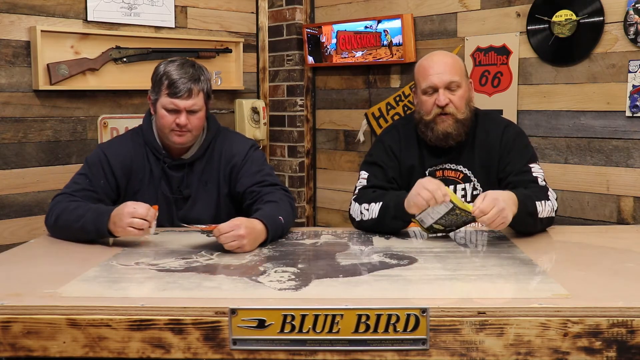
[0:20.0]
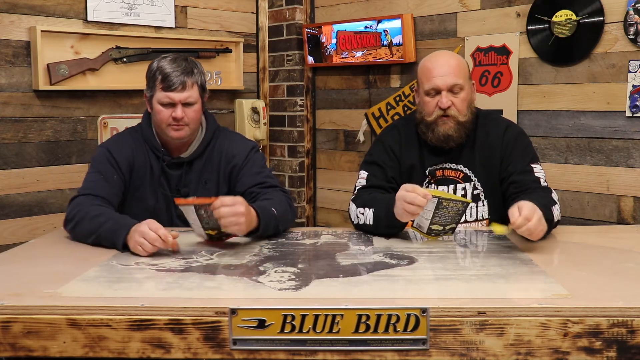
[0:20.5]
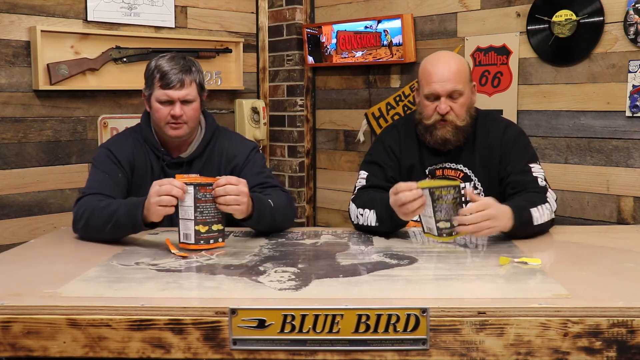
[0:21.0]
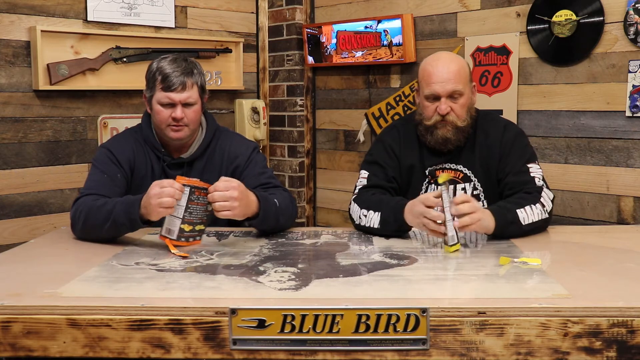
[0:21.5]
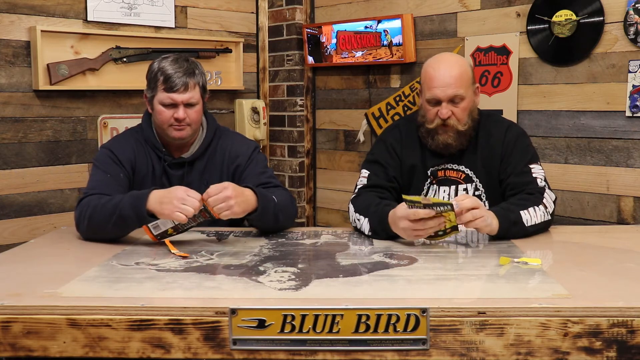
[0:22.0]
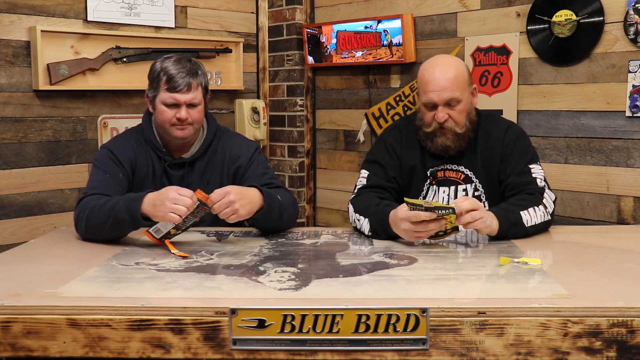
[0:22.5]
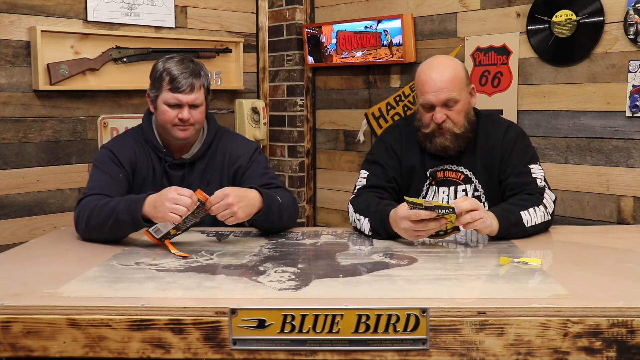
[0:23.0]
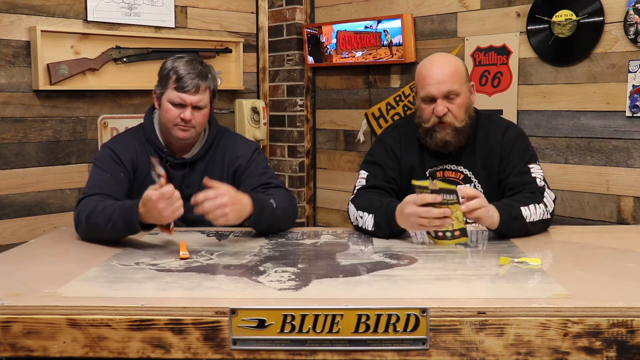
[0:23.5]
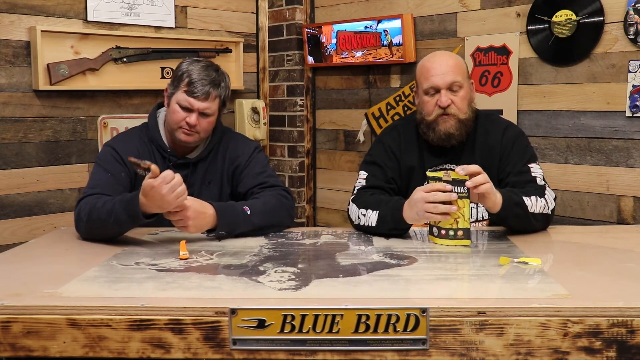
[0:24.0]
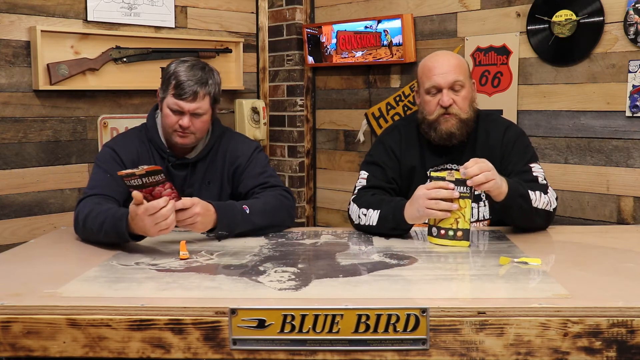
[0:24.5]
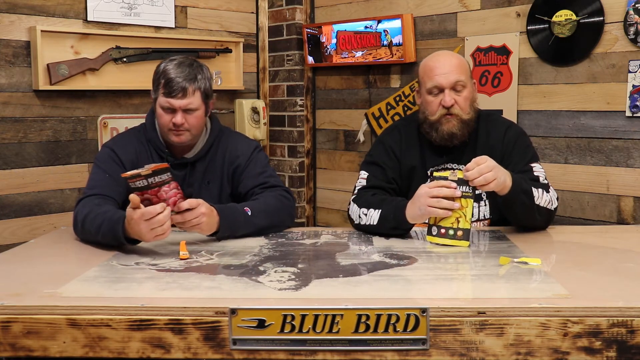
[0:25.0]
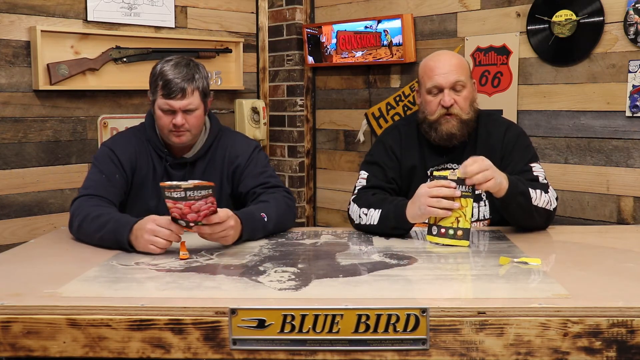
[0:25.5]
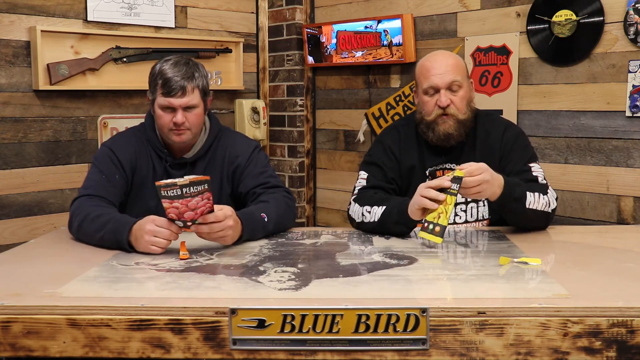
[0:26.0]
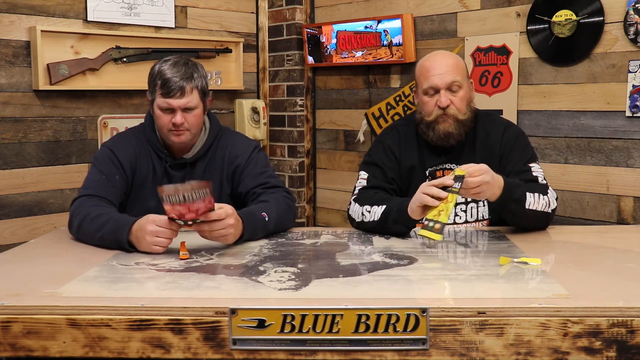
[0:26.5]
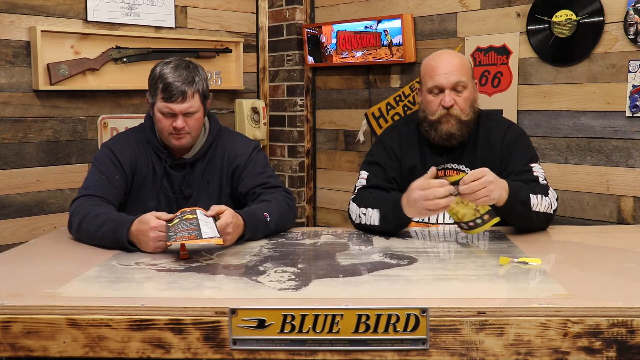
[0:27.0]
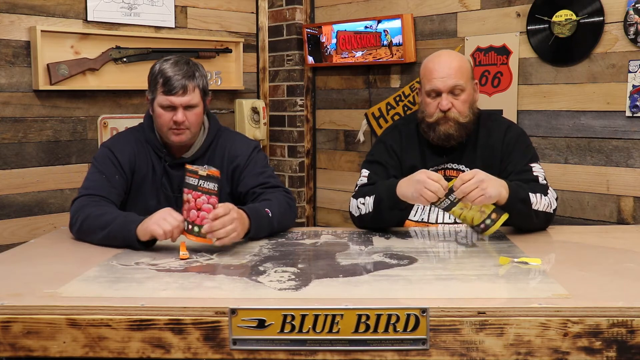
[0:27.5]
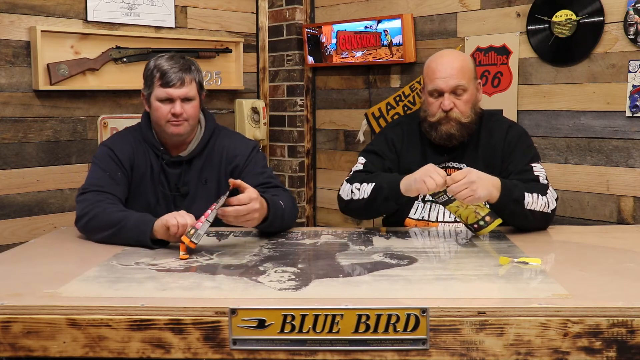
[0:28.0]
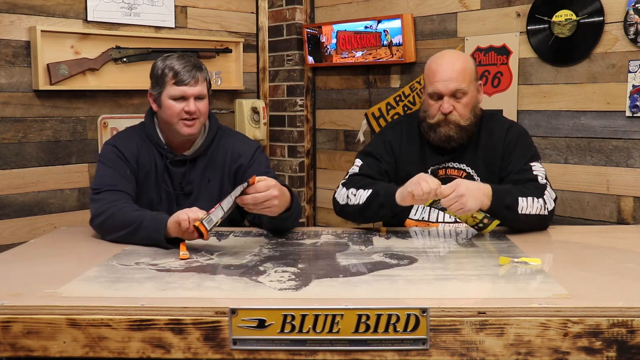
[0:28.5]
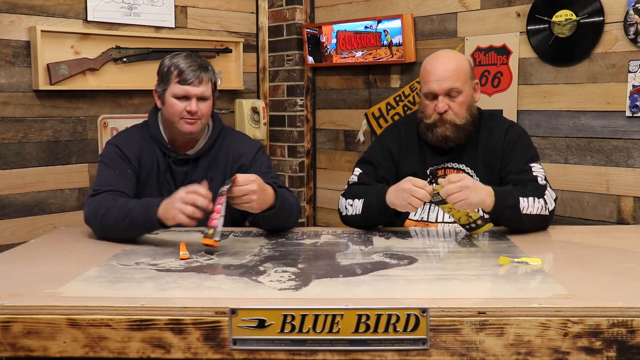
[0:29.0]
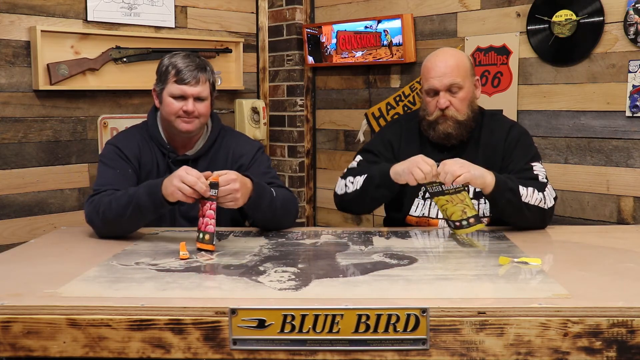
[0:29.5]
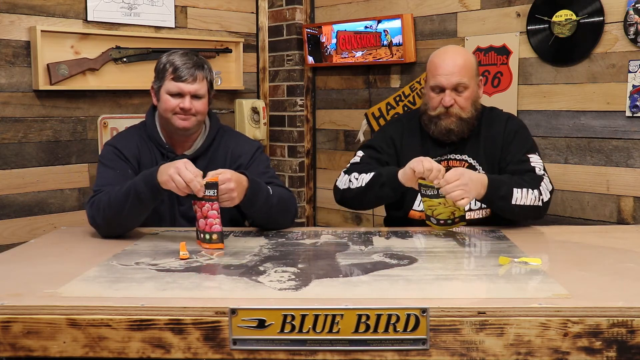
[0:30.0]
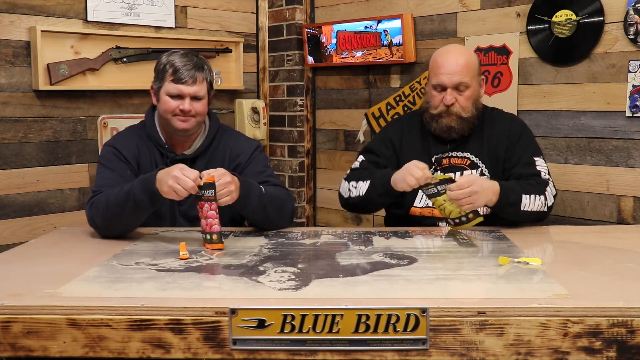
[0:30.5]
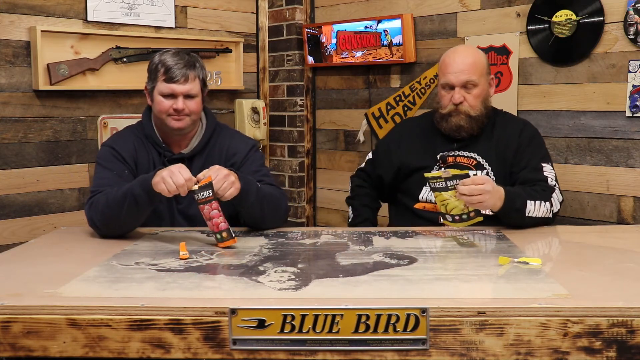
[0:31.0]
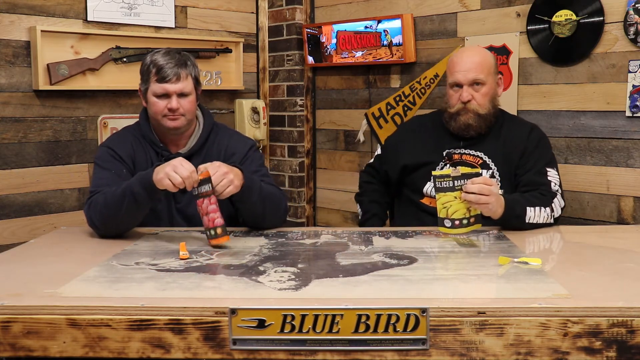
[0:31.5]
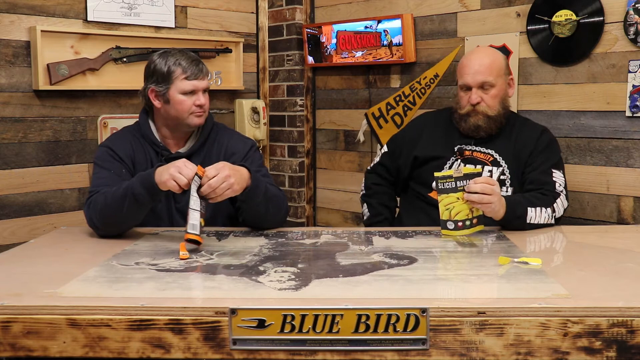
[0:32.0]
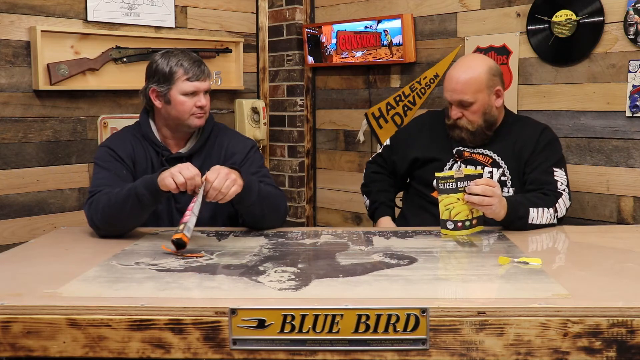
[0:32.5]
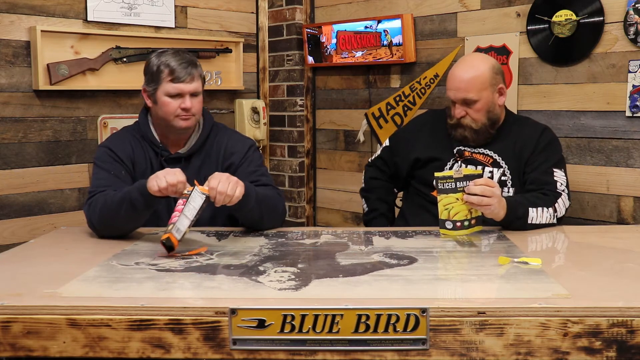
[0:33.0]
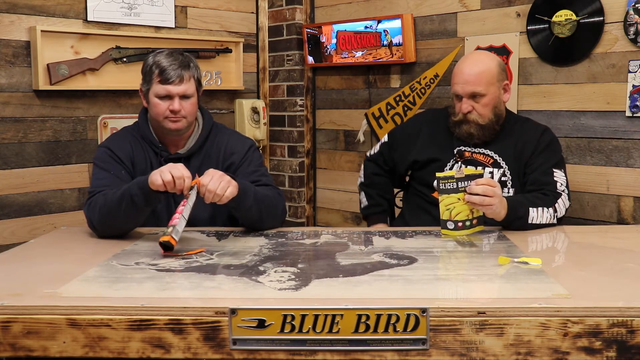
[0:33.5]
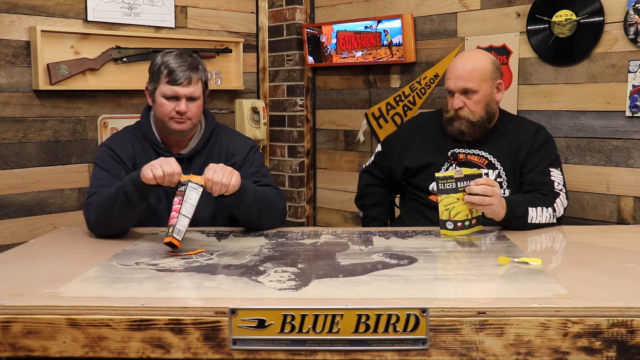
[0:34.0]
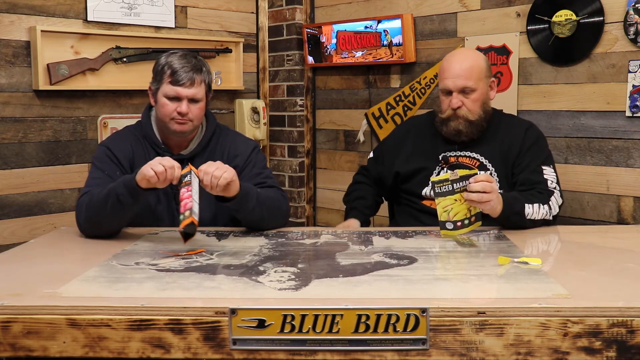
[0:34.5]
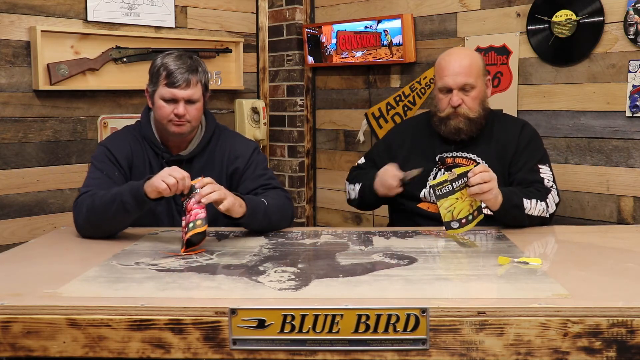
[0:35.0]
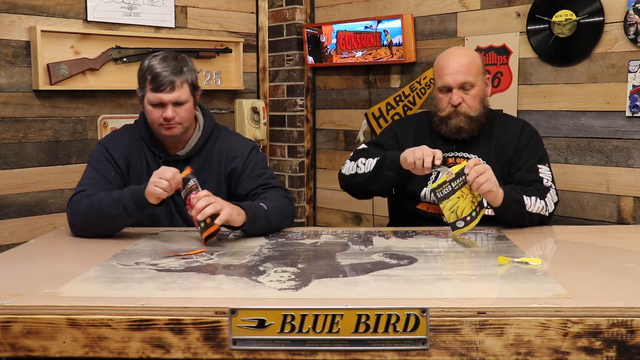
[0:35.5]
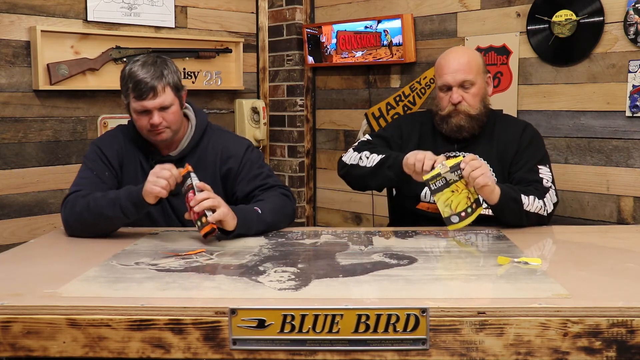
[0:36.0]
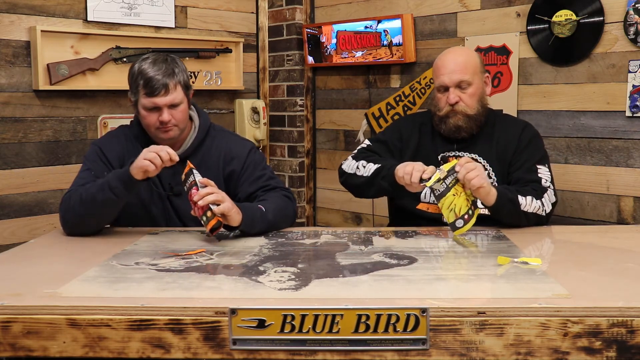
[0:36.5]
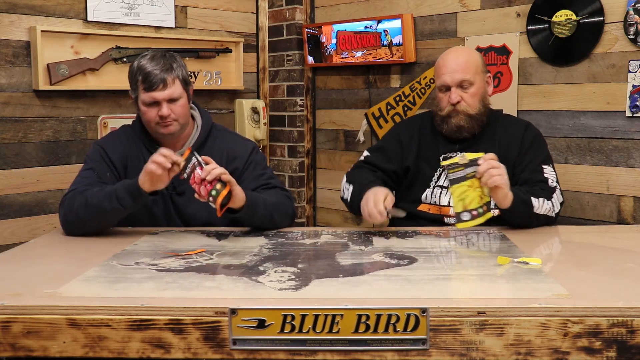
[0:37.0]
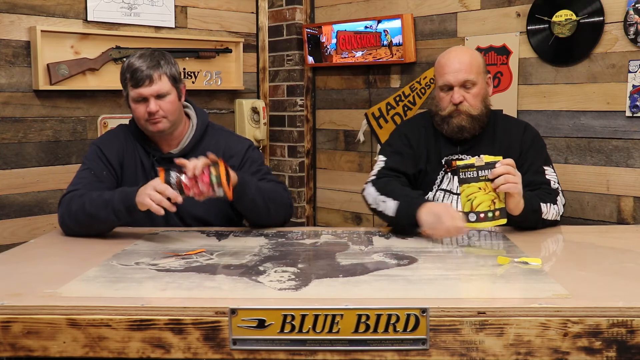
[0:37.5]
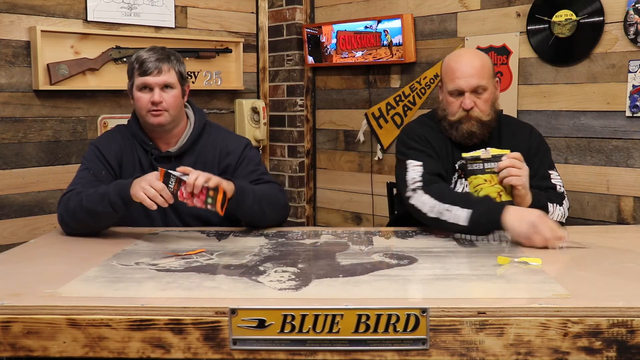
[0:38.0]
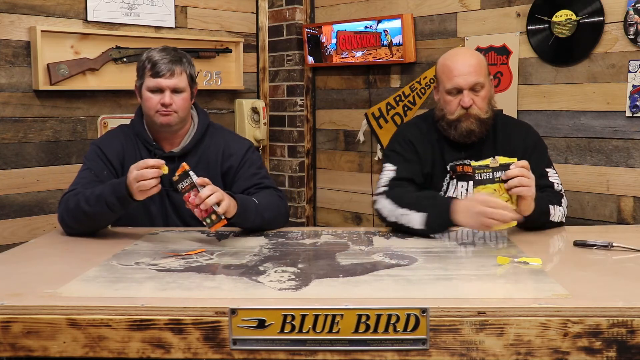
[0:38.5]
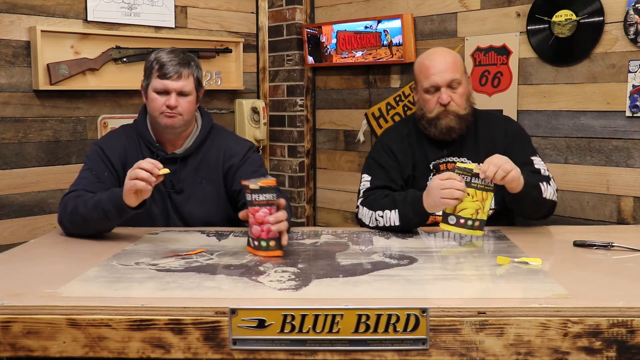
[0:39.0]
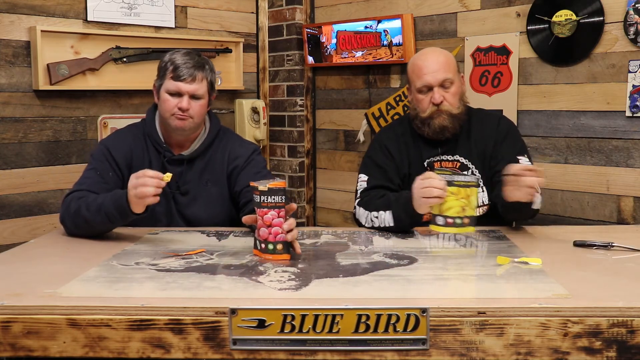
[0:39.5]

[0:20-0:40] The two men in black tops are at the table with the sticker on its front. The table seems to display an art picture, though the figure in it is unclear. Behind them the rifle is still hung on the wall, with LPs on the wall. What appeared to be posters or pamphlets can now be seen as sachets, and the men seem to be trying to tear them open in their hands. They eventually open them: one of them seems to open his with his hand, while the other seems to fail to open his by hand, grabs a knife from his pocket and finishes opening the sachet with the knife. The man who opened his by hand seems to pull something that seems like a rod out of the sachet.